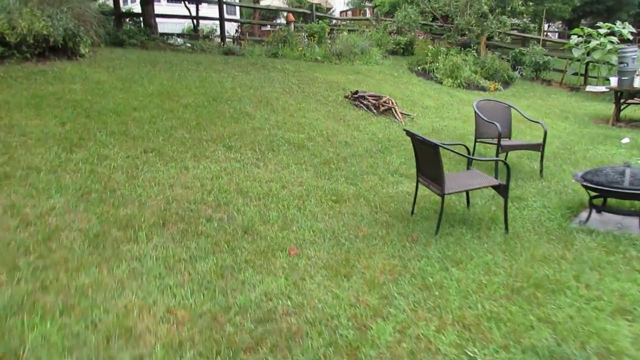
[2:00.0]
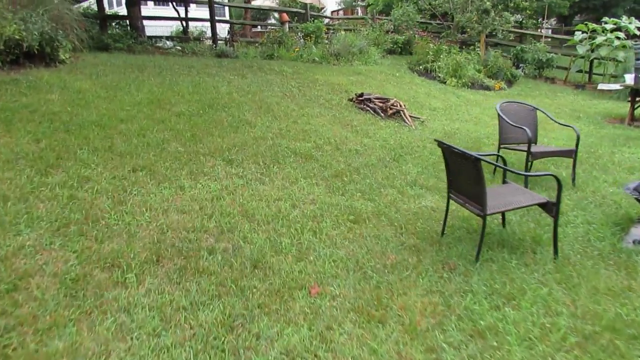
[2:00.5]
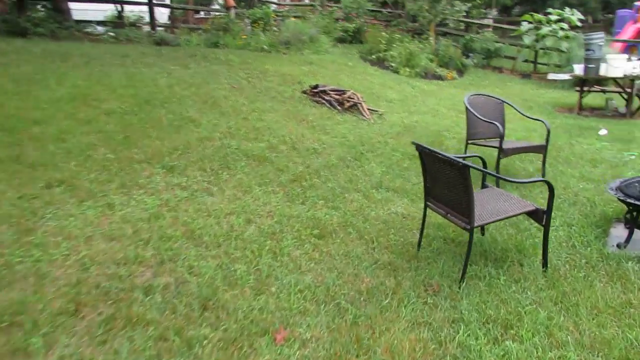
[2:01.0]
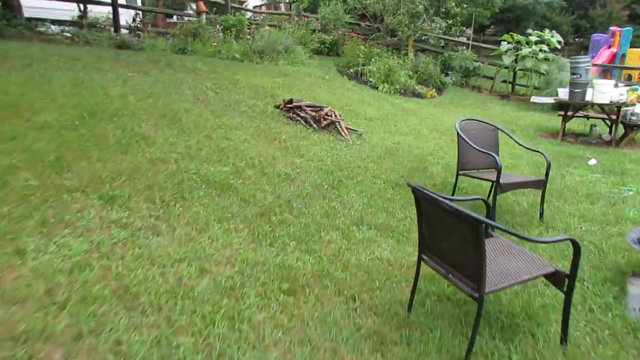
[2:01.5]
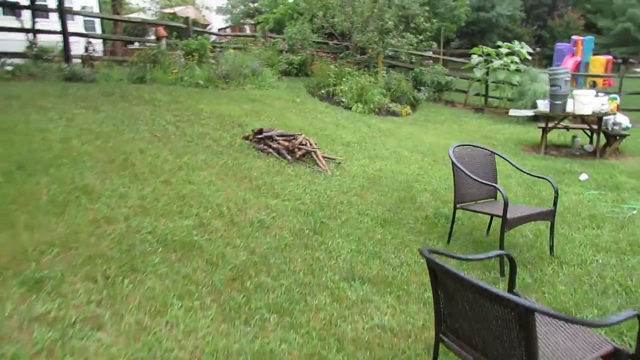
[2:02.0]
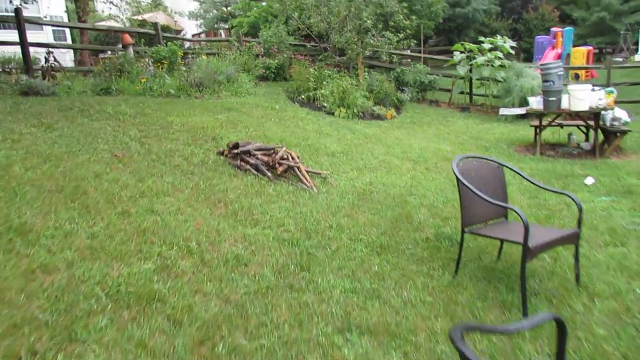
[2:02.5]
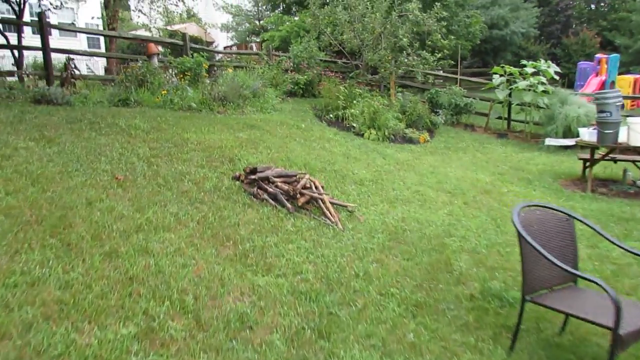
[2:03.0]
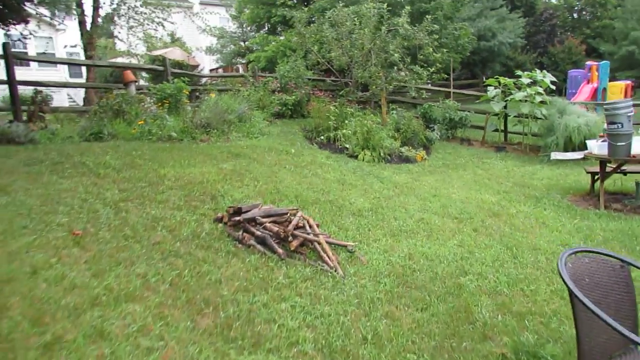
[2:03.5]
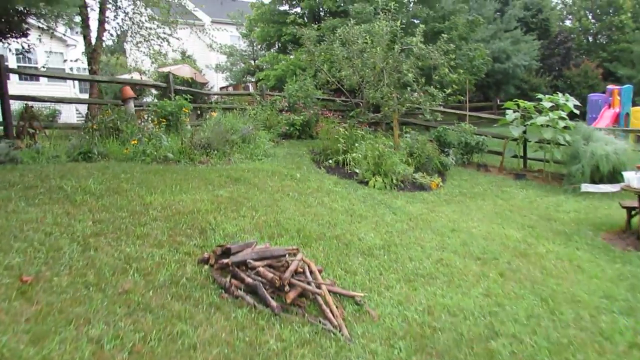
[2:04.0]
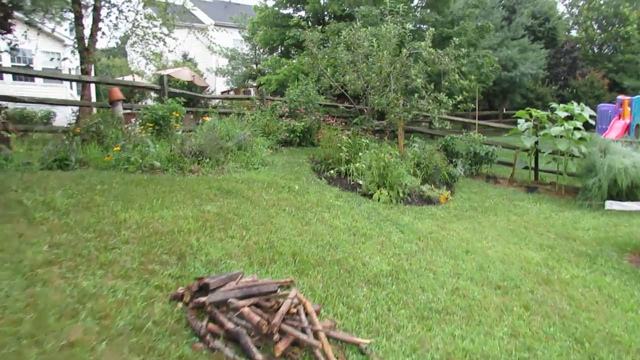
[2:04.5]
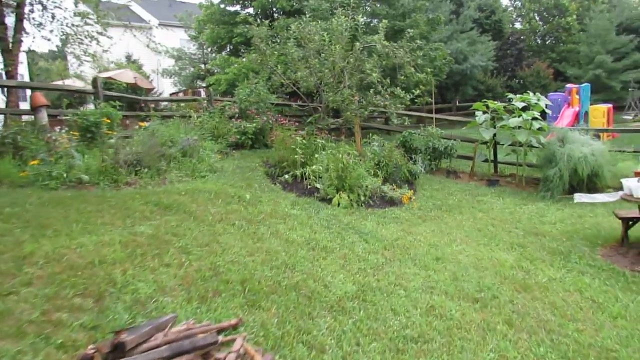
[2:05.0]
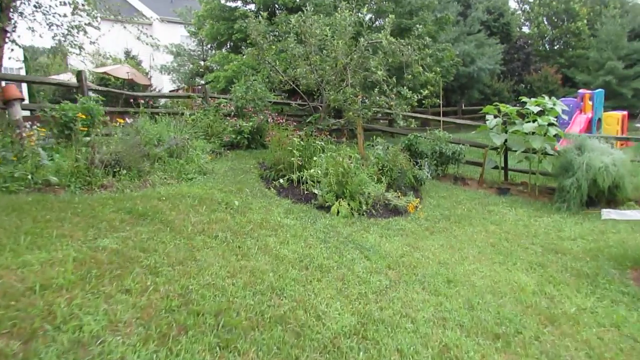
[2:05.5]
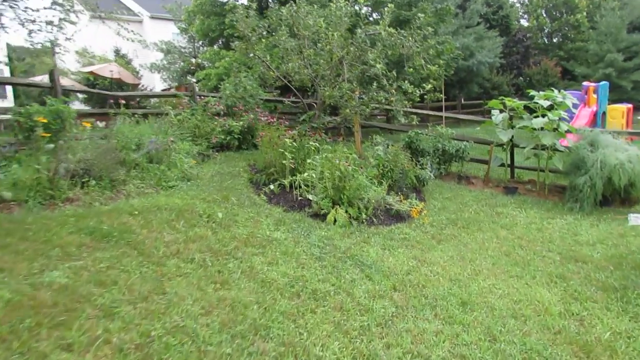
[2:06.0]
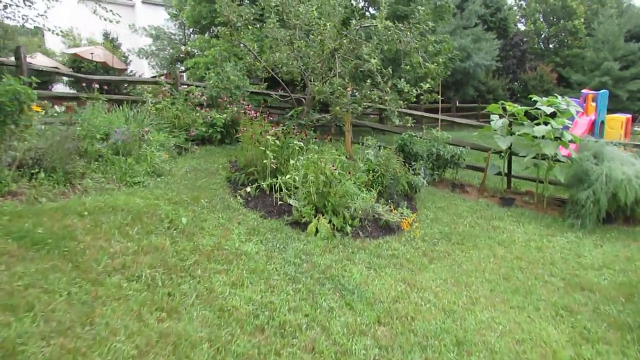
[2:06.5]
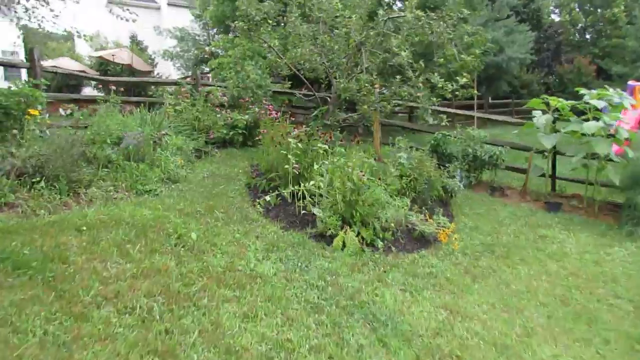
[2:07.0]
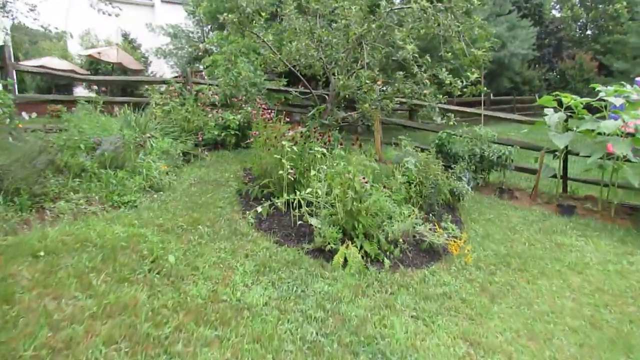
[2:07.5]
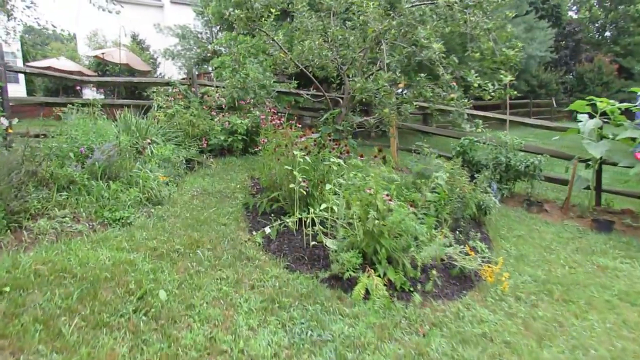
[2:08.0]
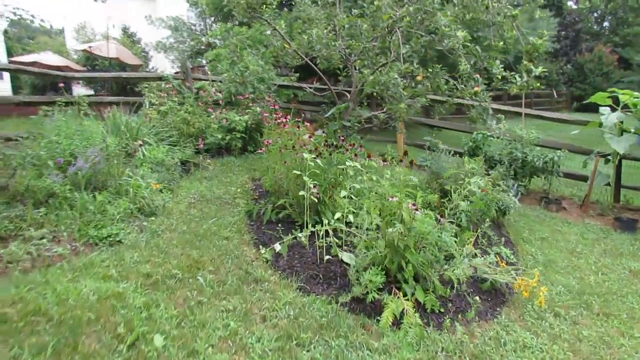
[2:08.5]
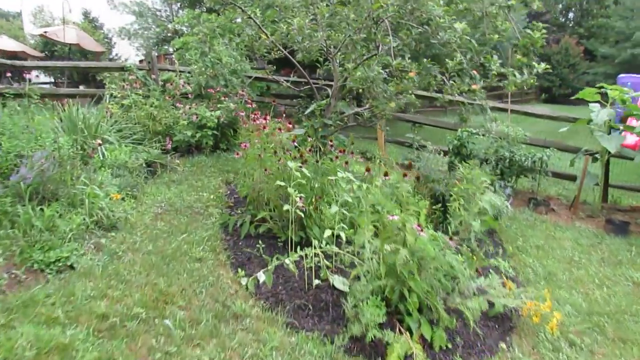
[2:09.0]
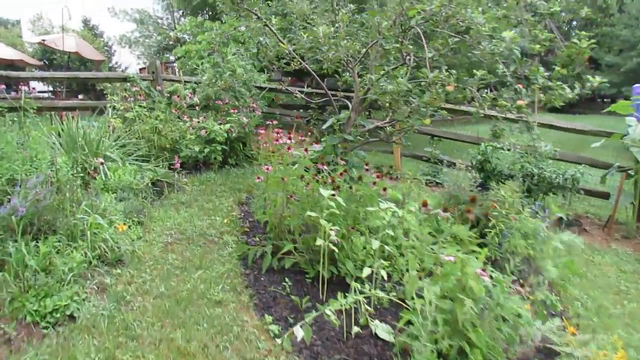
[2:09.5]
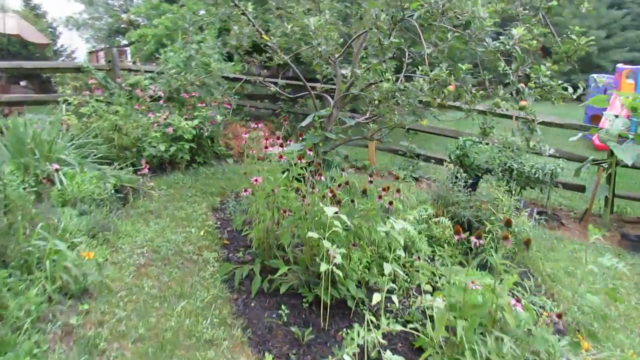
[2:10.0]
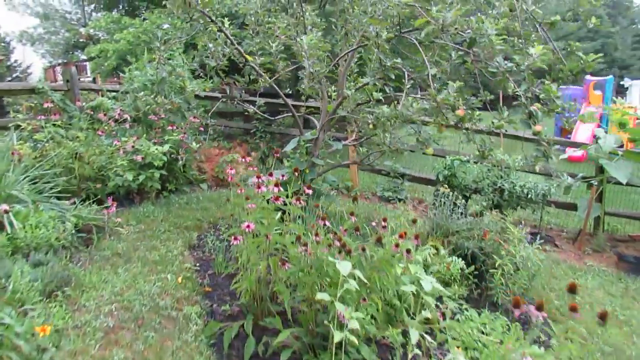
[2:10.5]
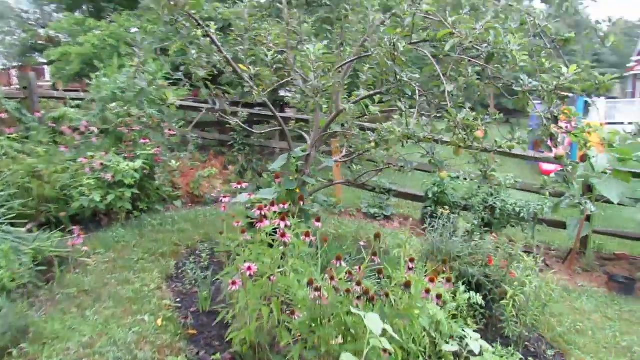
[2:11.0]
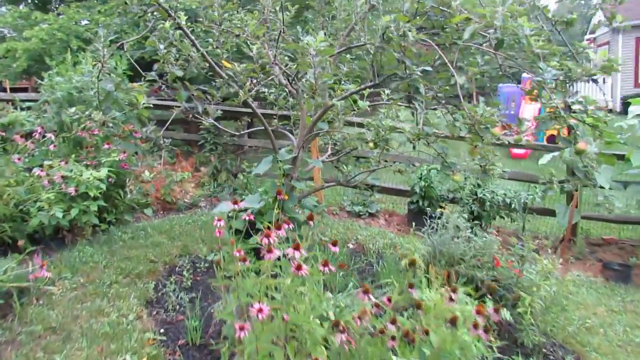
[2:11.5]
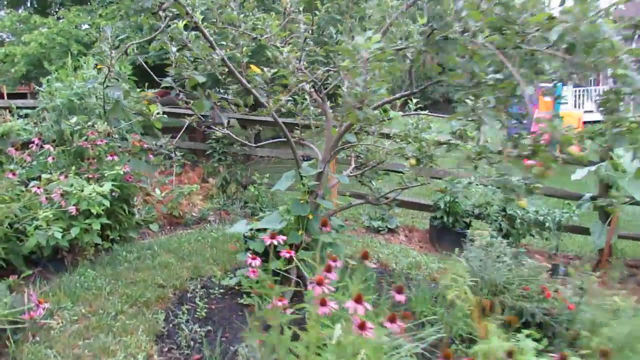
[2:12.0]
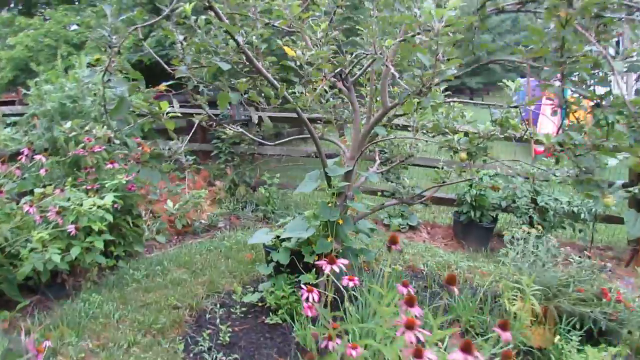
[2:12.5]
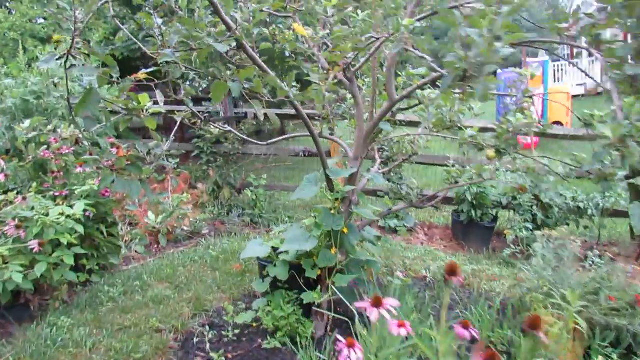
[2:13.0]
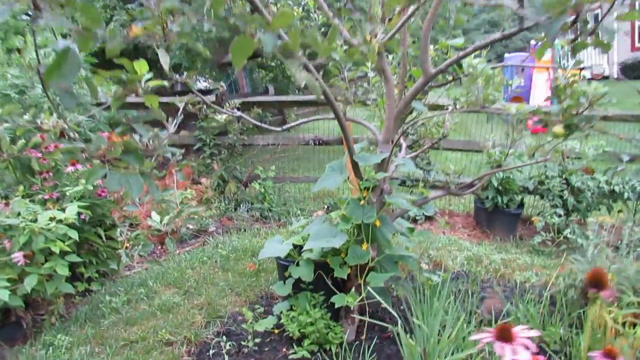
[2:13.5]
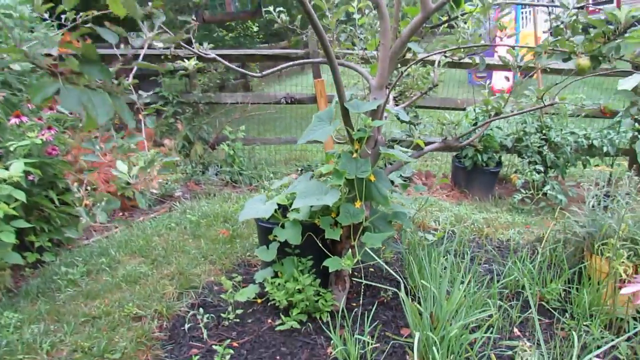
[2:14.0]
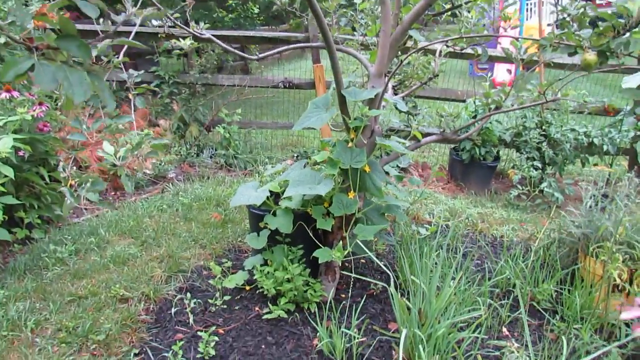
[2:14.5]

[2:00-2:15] The camera walks forward in the backyard. On the right are two brown chairs, possibly wicker, with skinny legs and arms, around the freestanding wrought iron fire pit, which has some kind of lid or top that can be taken off to add logs. Further on, a pile of wooden sticks on the ground is so neat and tidy that it looks like someone put it there rather than it occurring naturally. The yard ends at a wooden fence with rails, and beyond it is someone else's yard, seemingly the property next door, with a very colourful plastic play structure with a red slide, a yellow tunnel and other colours such as blue, purple and red. The camera mostly focuses on walking over to another plant: a tree with a plant, presumably also a cucumber plant, growing upwards along its side, with green leaves and small yellow flowers.